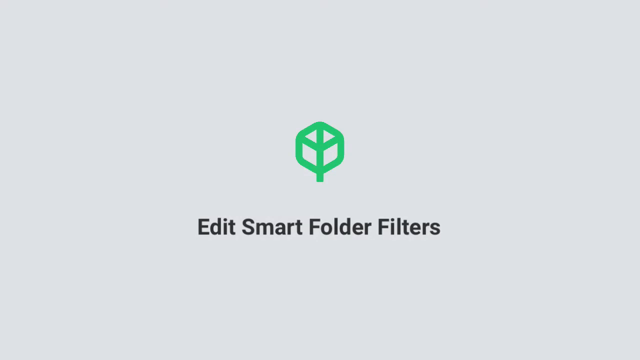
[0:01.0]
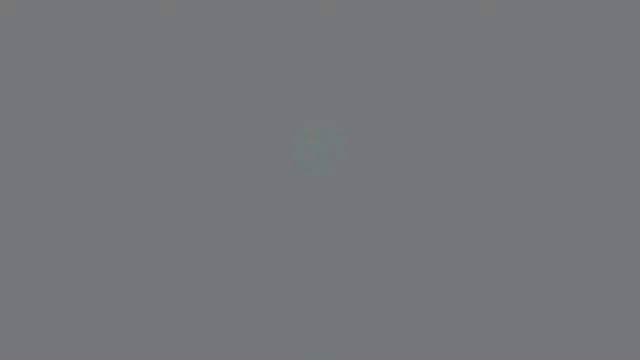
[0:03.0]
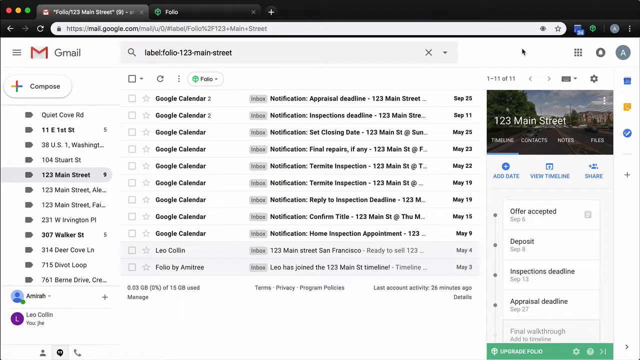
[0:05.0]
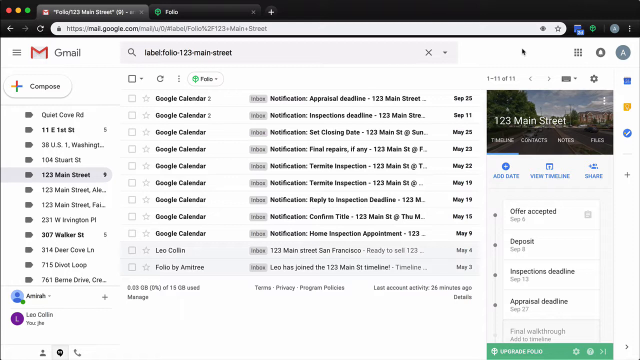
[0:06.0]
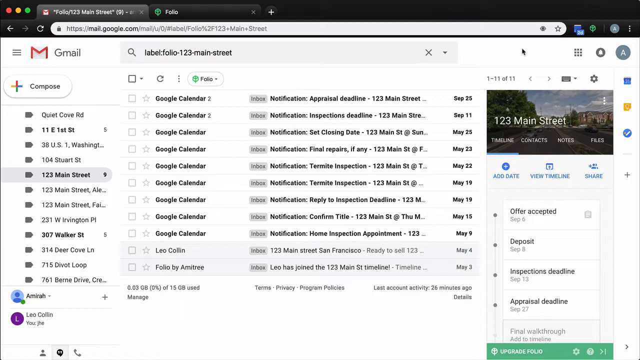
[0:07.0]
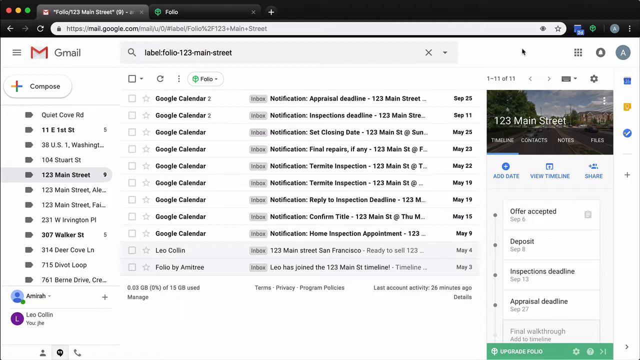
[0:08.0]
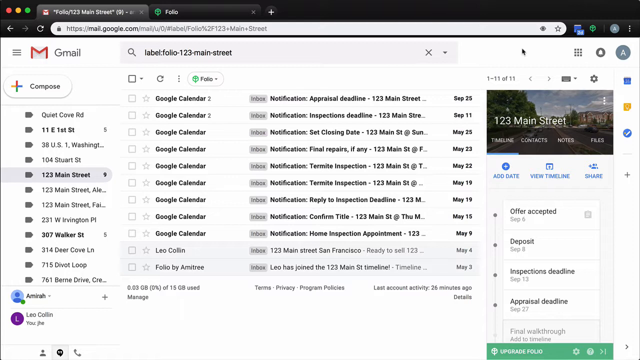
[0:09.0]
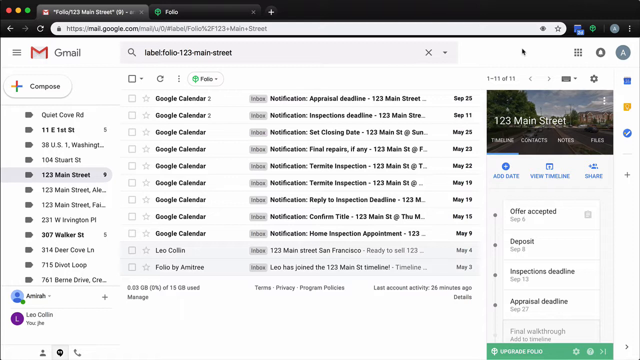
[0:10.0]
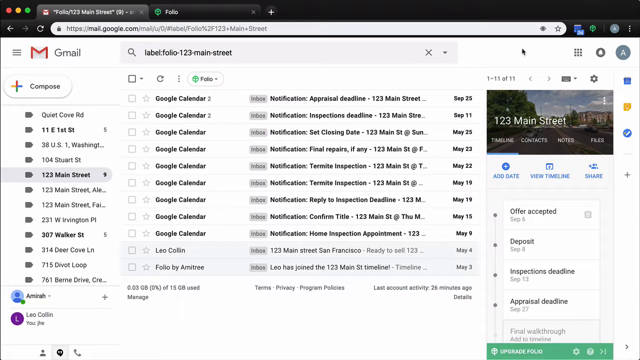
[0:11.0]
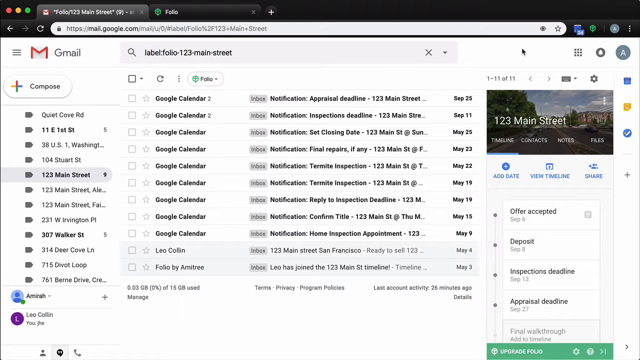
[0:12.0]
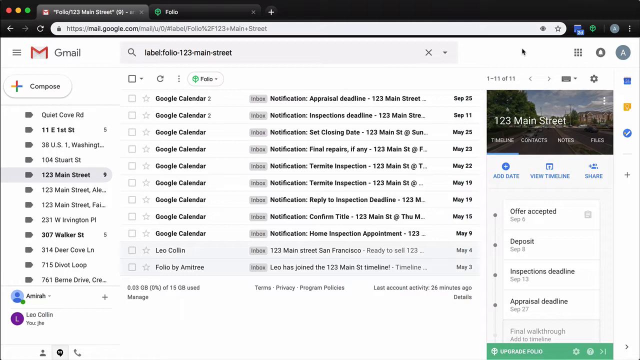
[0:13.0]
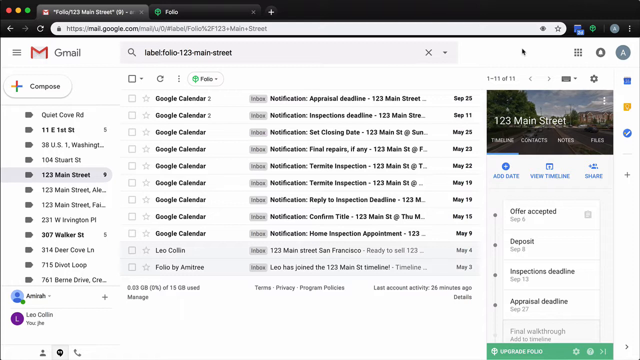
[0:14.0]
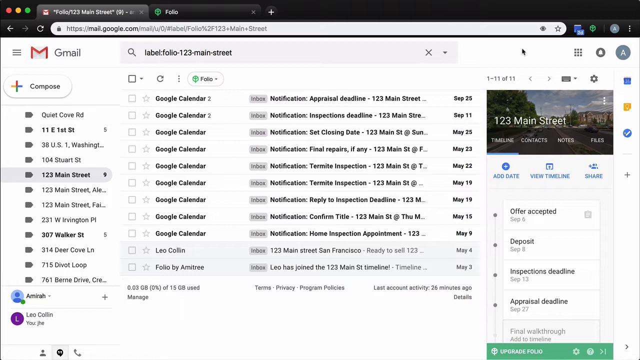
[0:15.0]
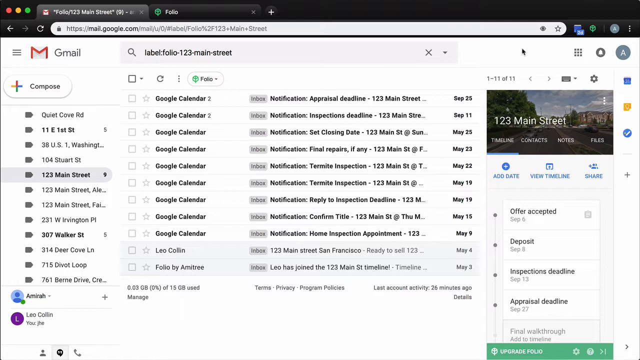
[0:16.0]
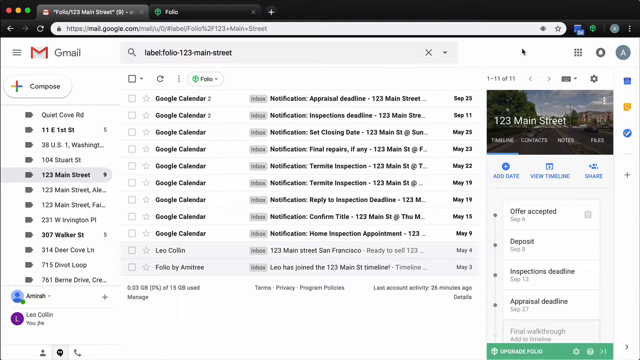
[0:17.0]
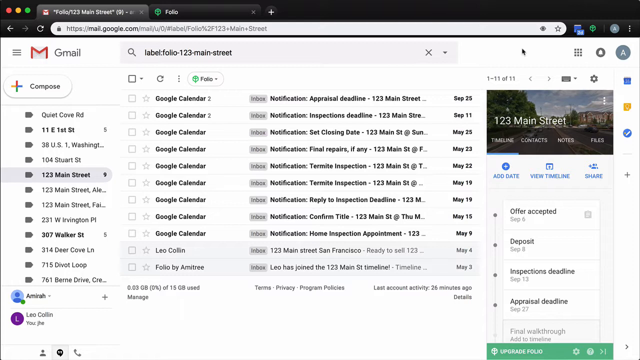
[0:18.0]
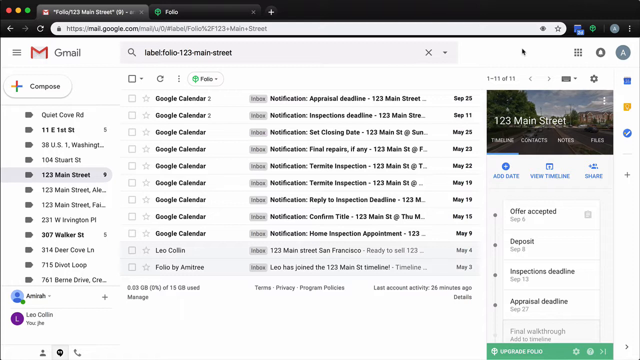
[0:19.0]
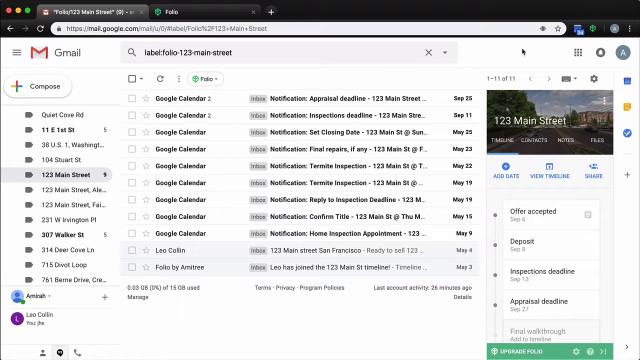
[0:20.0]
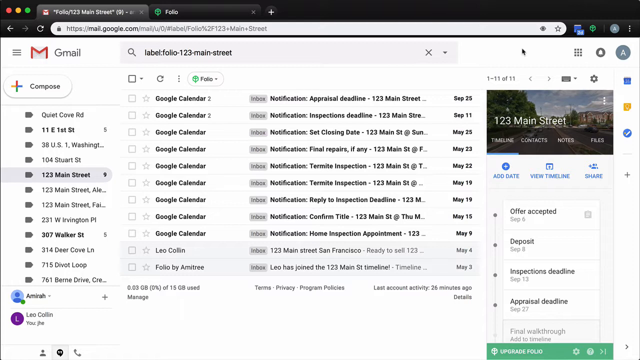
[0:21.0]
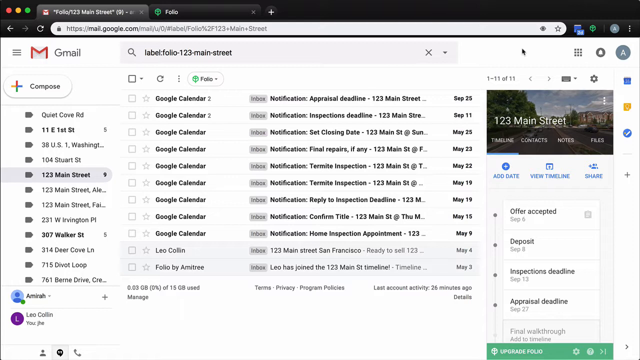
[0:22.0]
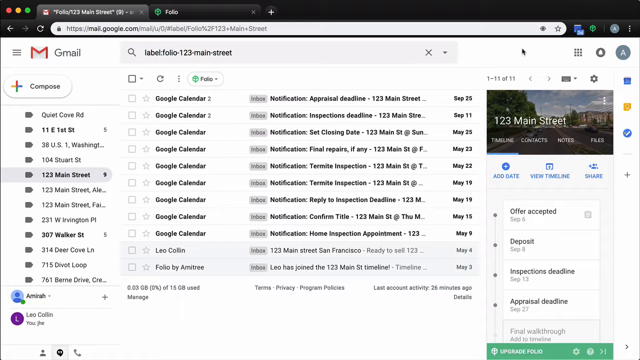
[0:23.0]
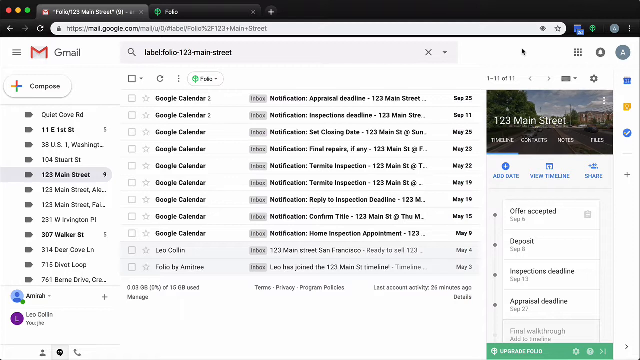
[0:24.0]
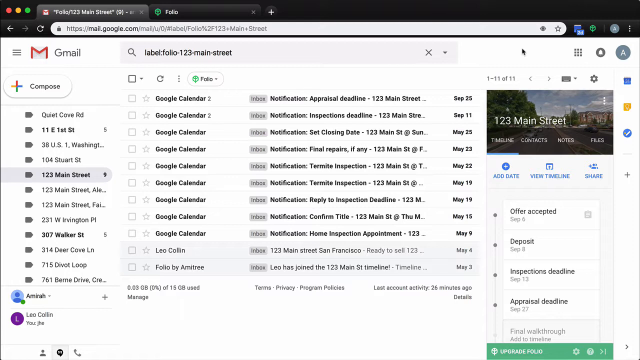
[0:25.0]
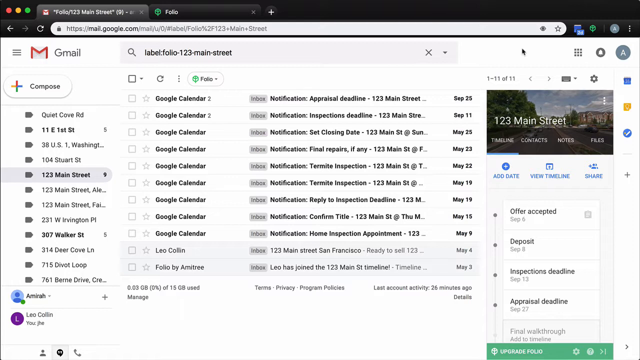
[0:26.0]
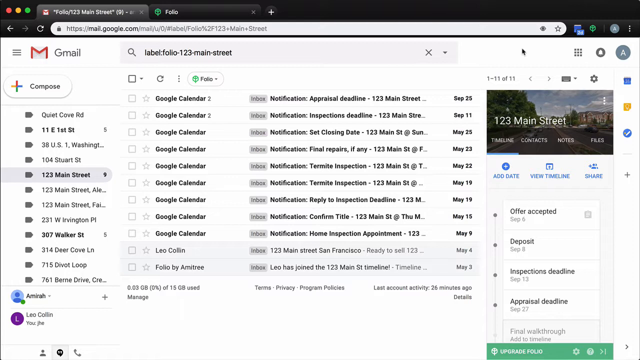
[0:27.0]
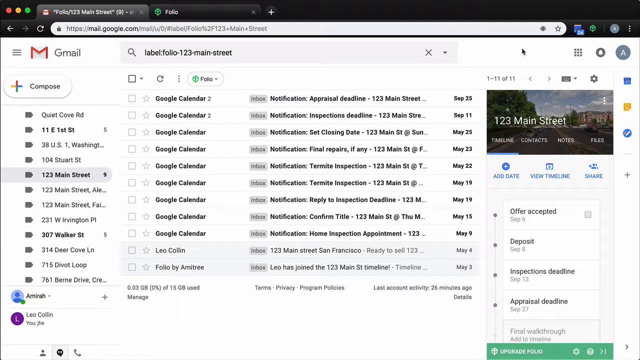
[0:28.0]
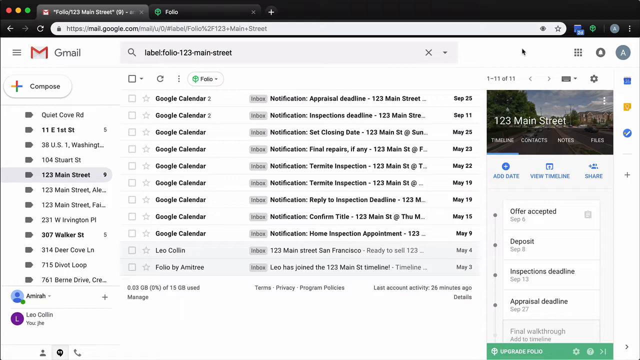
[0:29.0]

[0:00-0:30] The video opens with an introduction reading "Edit Smart Folder Filters" on a grey background with a green, leaf-shaped icon. Next, the Gmail web page appears on an Apple device or an Apple Chrome browser, showing emails from Google Calendar and user notifications. These are results from the search bar at the top, which holds a label search containing "123-Main-Street". The results, mostly from Google Calendar, contain the keywords entered in the search bar. They are unopened except for the ones from Leo Collin and Amitri, which are opened. On the right side there is a 123 Main Street panel with timeline, contact, note and files, and below it three buttons: add date, view timeline and share.